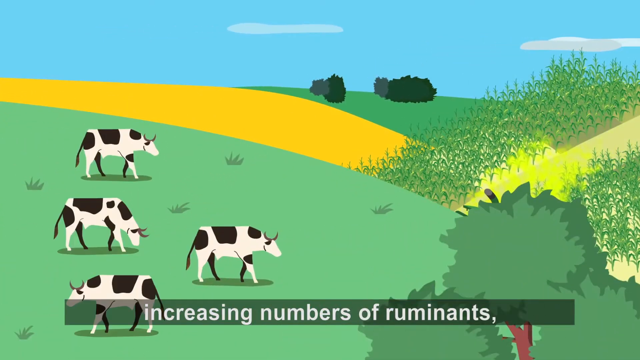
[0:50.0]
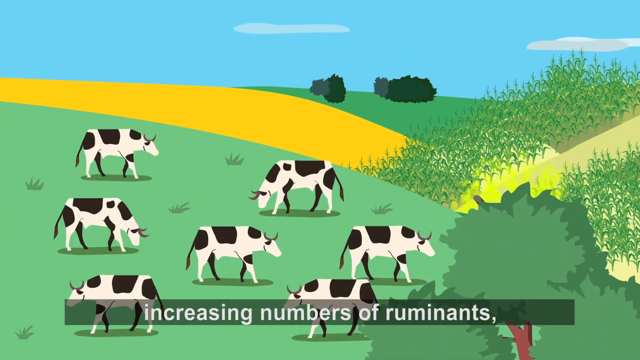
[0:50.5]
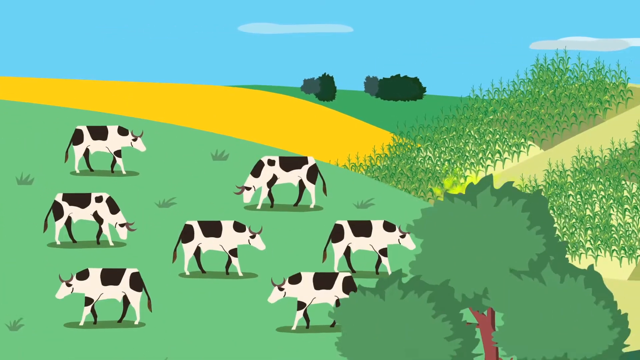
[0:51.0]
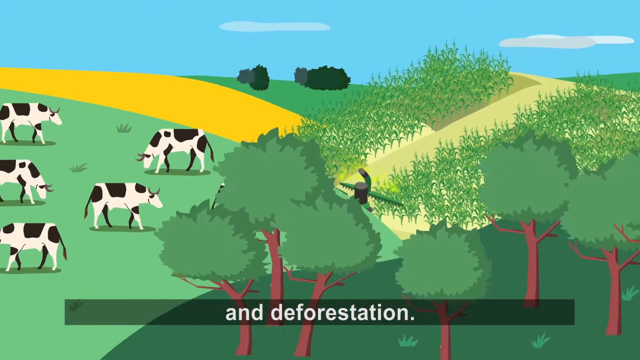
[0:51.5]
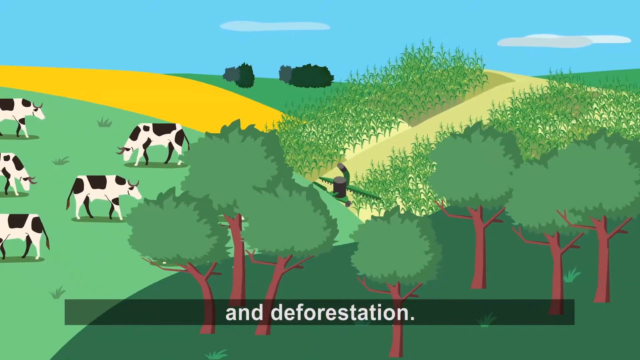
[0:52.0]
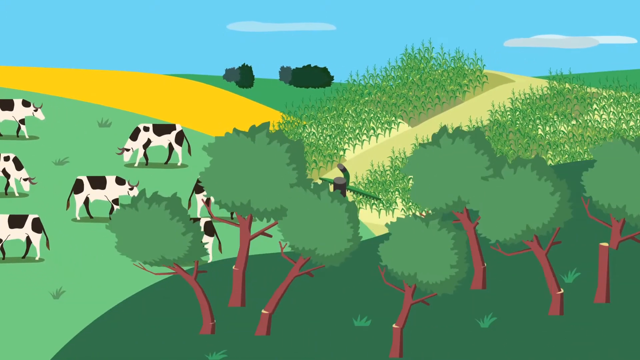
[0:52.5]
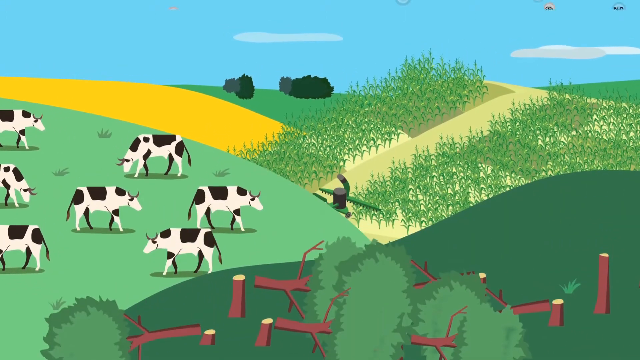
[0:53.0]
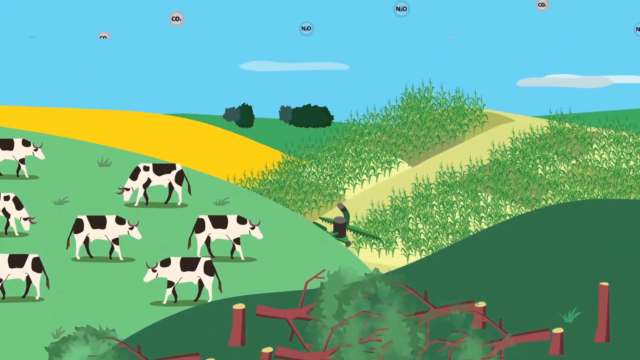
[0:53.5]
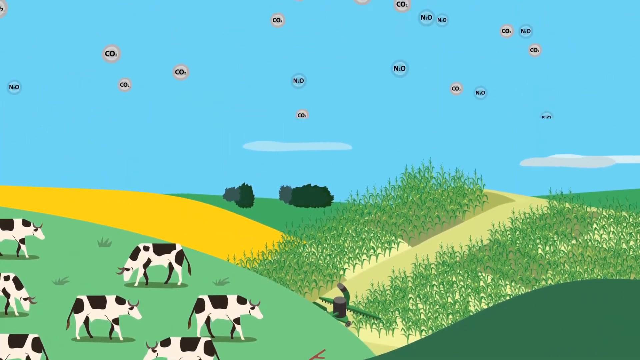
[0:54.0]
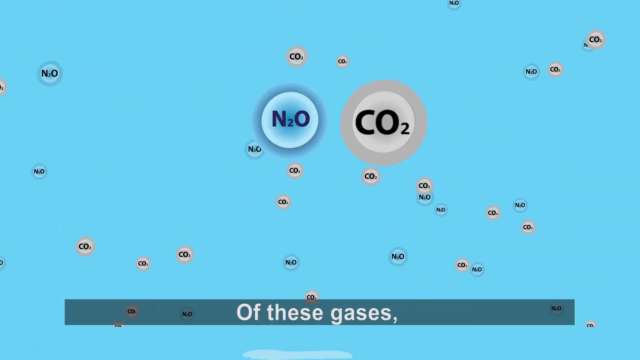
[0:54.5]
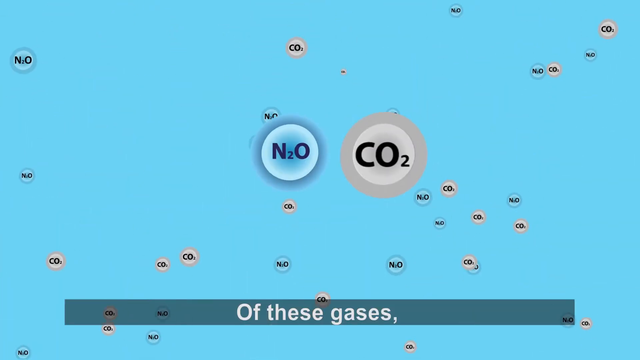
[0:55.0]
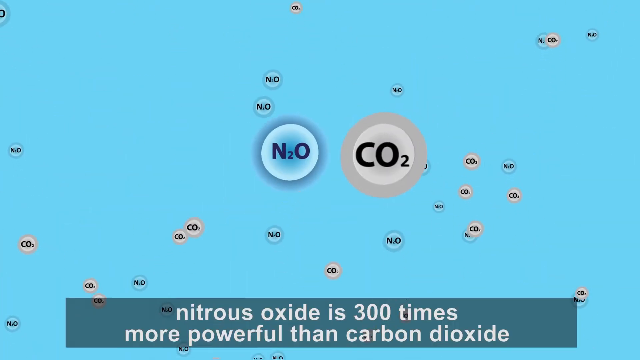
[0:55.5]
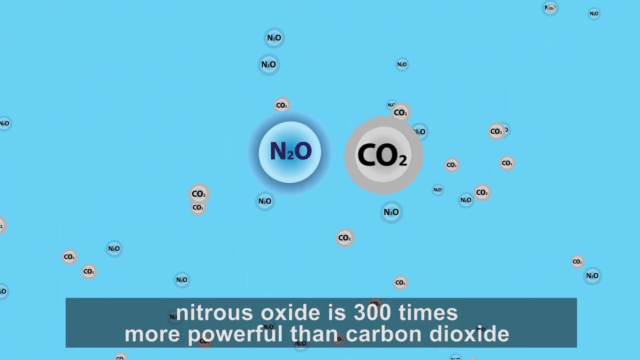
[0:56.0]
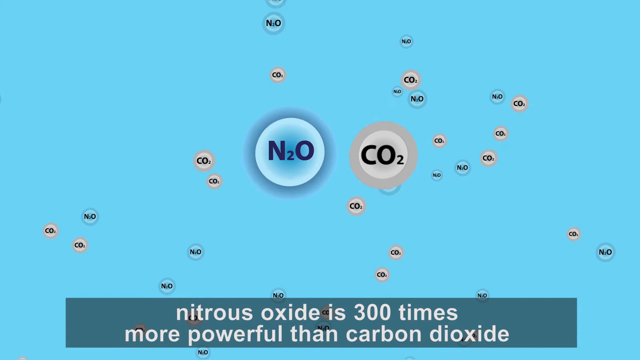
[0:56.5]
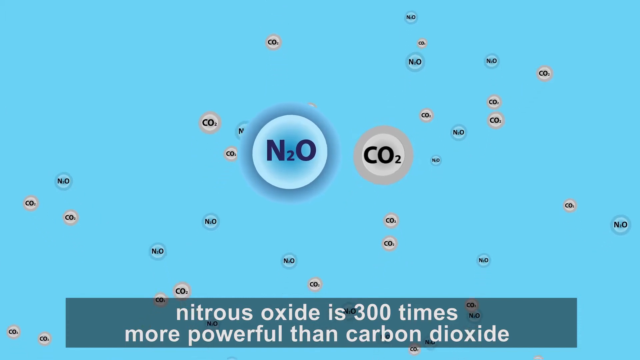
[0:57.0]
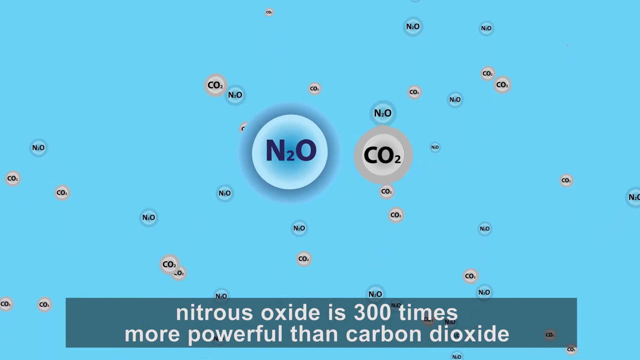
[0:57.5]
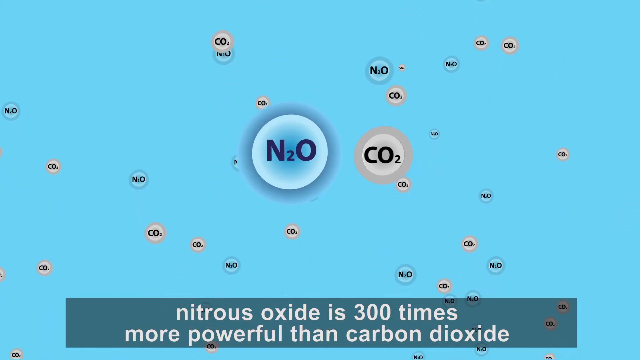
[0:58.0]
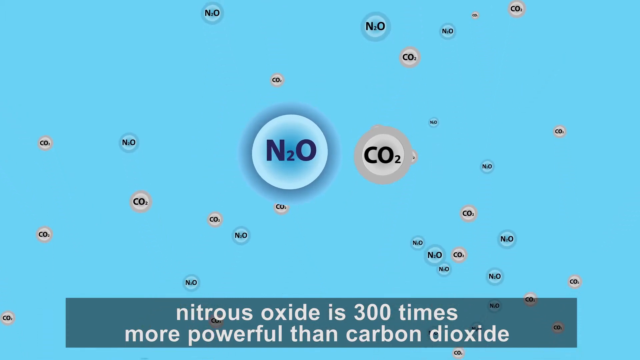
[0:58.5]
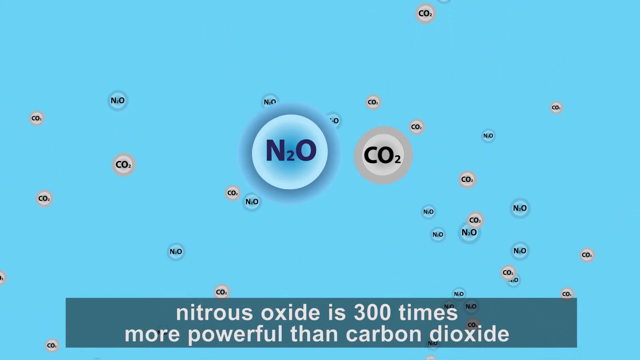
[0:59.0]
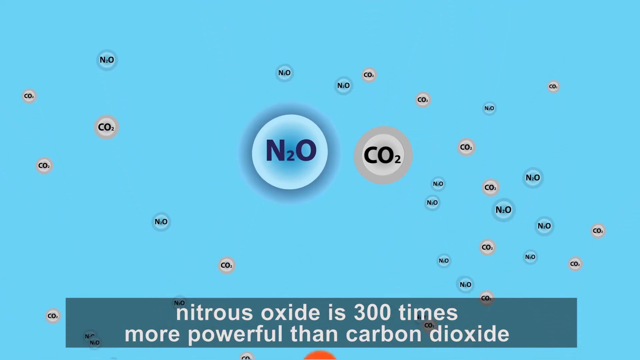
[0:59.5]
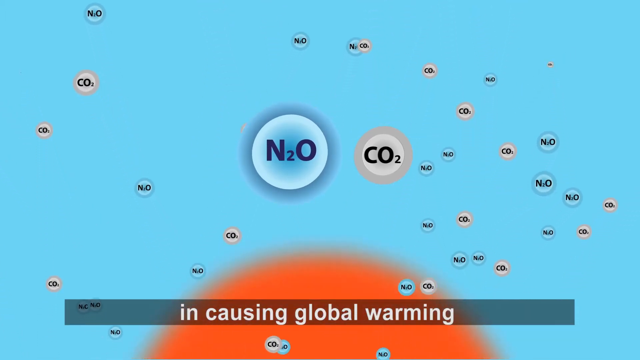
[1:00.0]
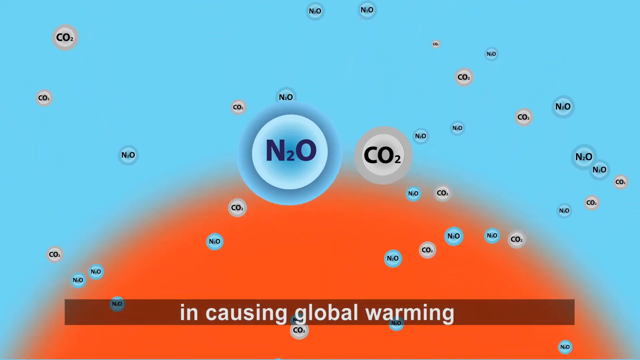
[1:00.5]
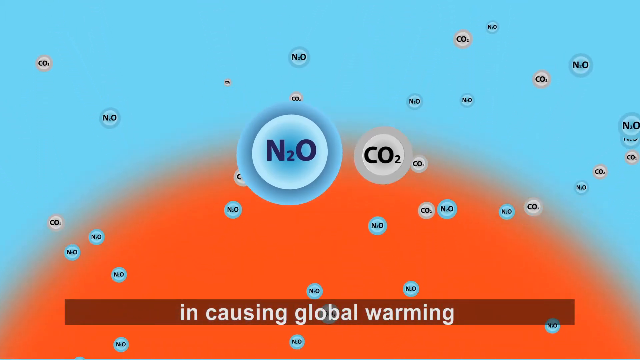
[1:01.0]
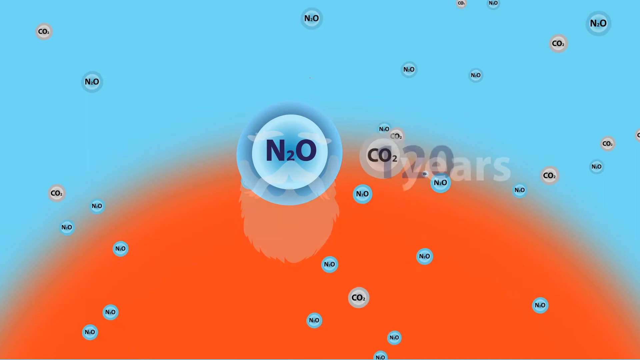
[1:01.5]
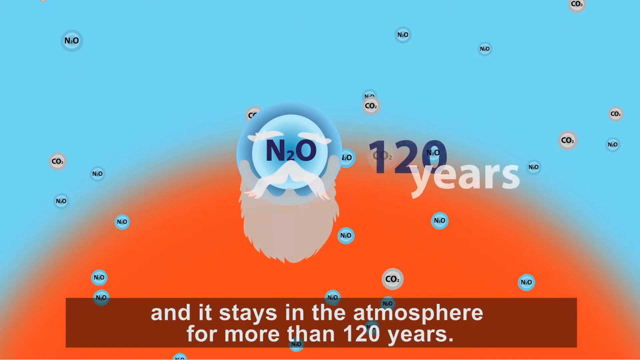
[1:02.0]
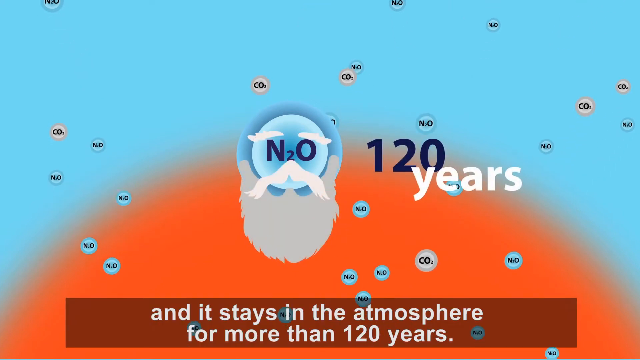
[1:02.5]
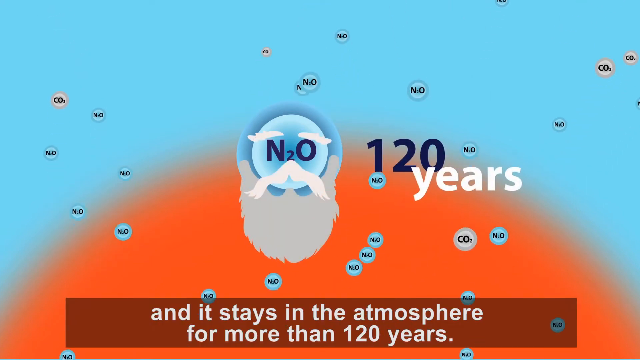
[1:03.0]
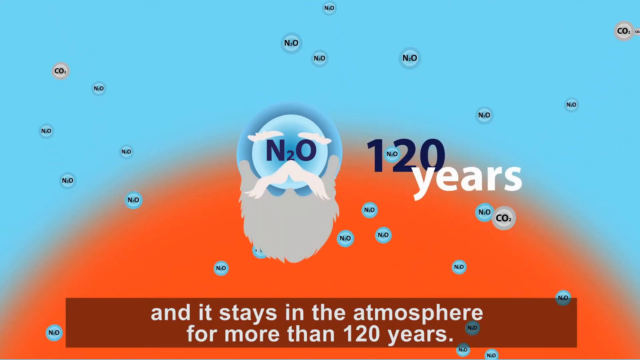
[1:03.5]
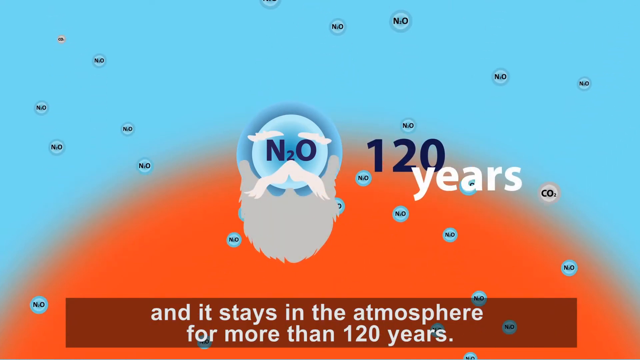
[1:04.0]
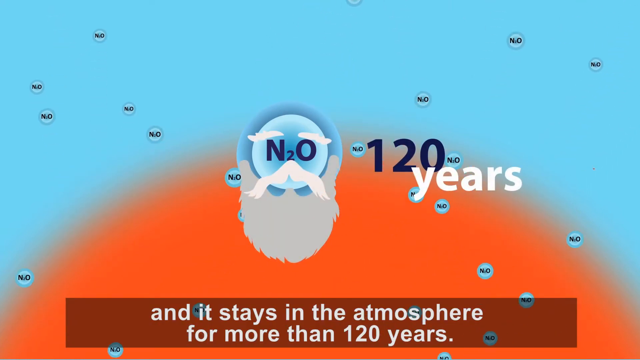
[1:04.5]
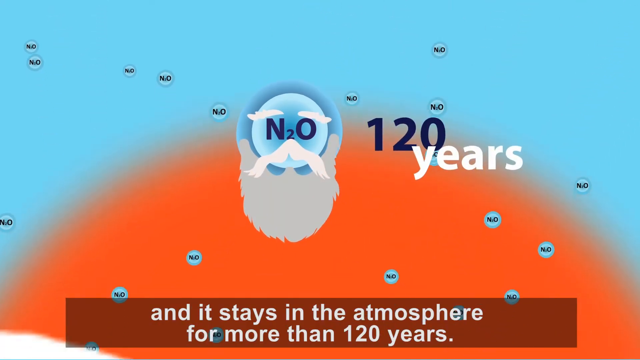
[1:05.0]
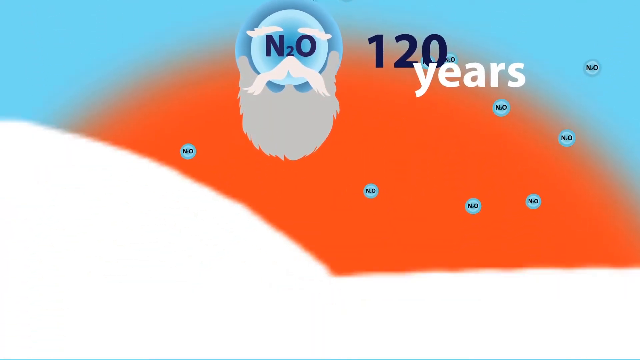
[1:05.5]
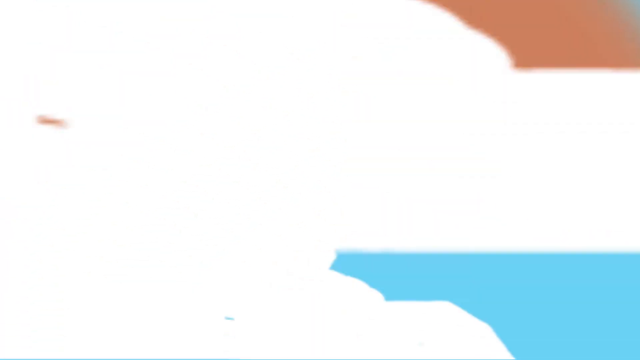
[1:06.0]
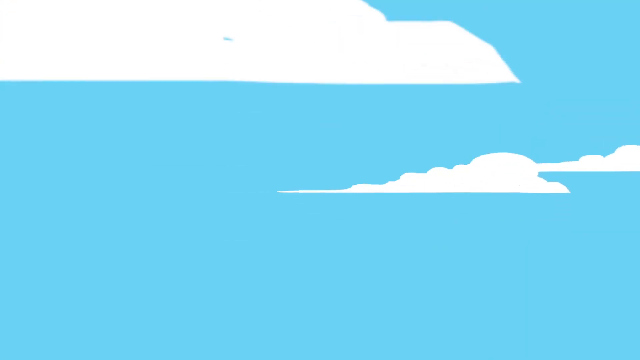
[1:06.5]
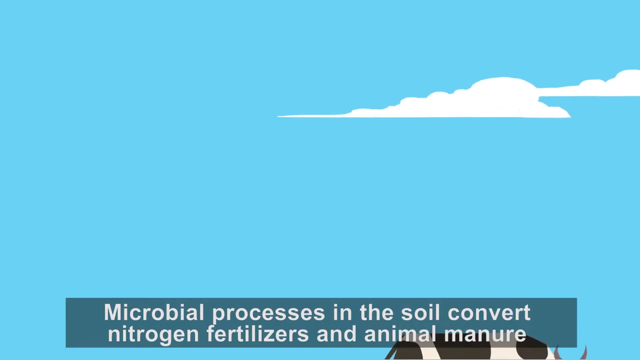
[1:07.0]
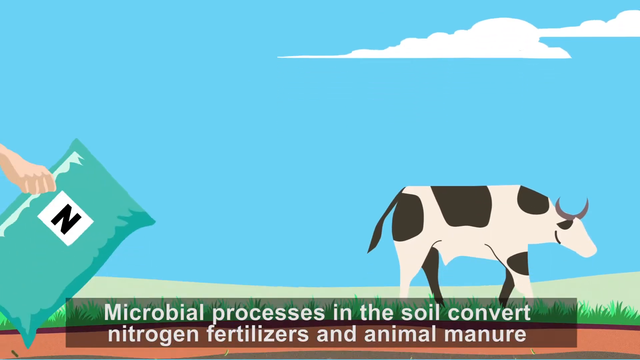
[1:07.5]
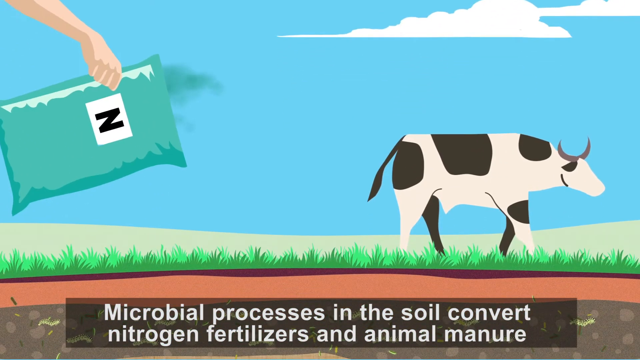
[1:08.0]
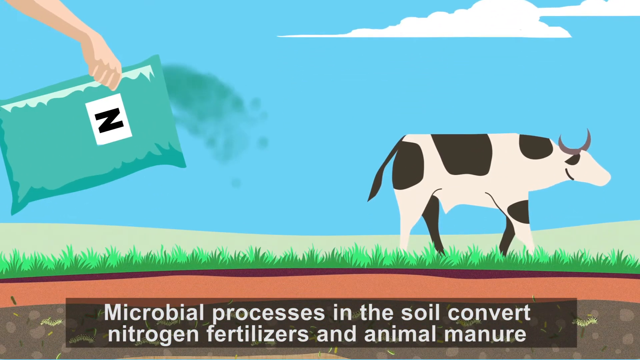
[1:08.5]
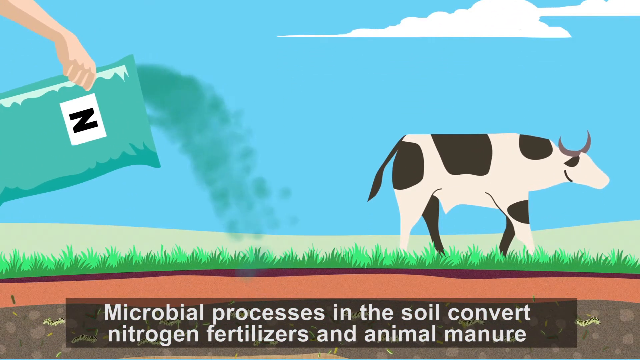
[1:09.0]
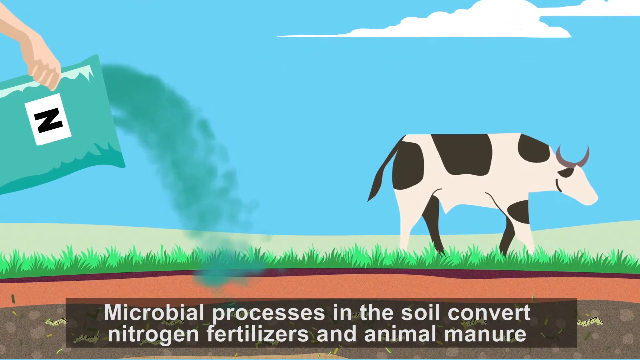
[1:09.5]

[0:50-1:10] White and black cows are on grass on the left-hand side. White text at the bottom reads "increasing number of ruminants'" and, on the next line, "and deforestation." As those words appear, trees are cut almost at the root and fall to the side. Circles with chemicals appear in the image: blue for NO and gray for CO, and "N2O" appears. Text reads "nitrogen oxide is 300 times more powerful than carbon dioxide, and causing global warming" and "stays in the atmosphere for more than 120 years." Further text reads "microbial processes in the soil convert nitrogen fertilizers".